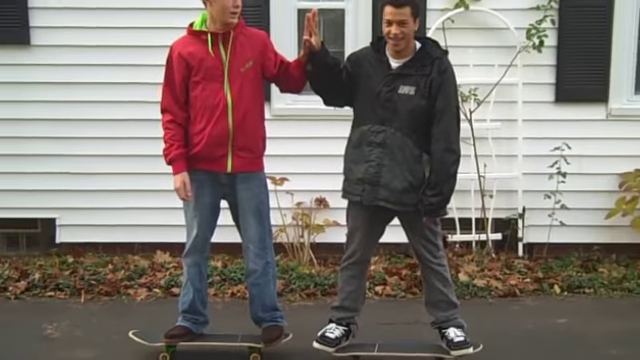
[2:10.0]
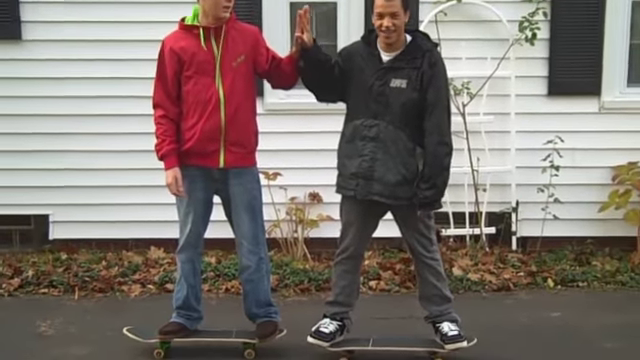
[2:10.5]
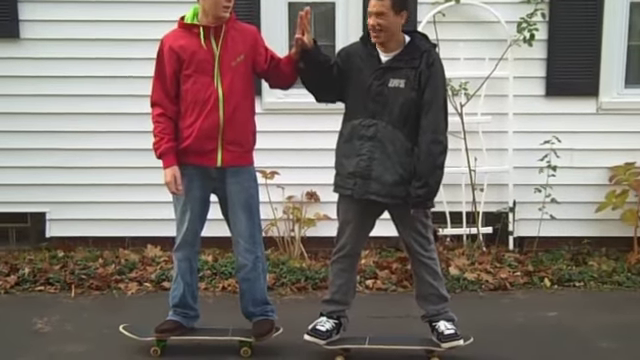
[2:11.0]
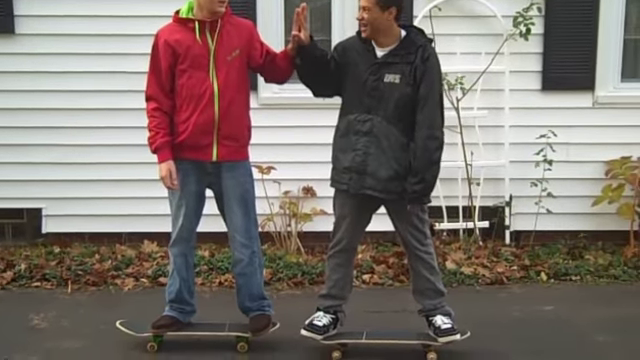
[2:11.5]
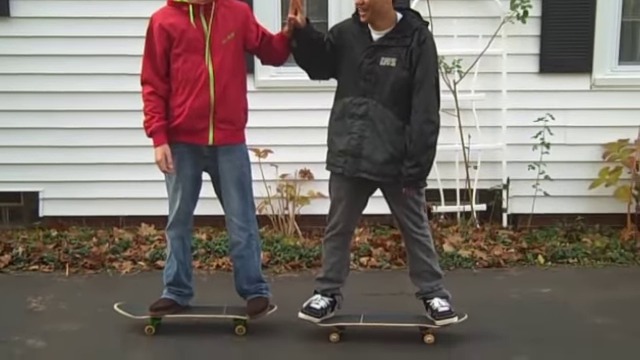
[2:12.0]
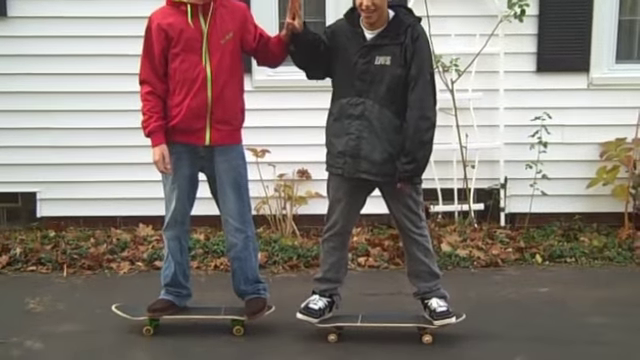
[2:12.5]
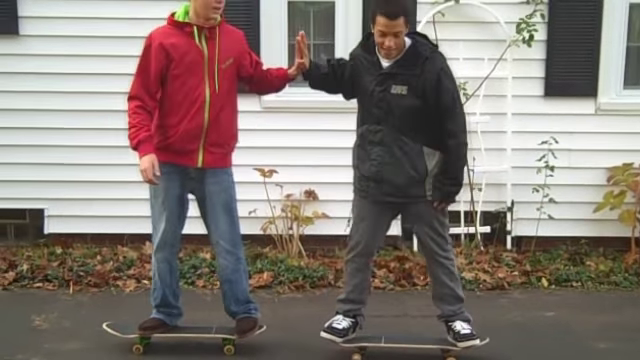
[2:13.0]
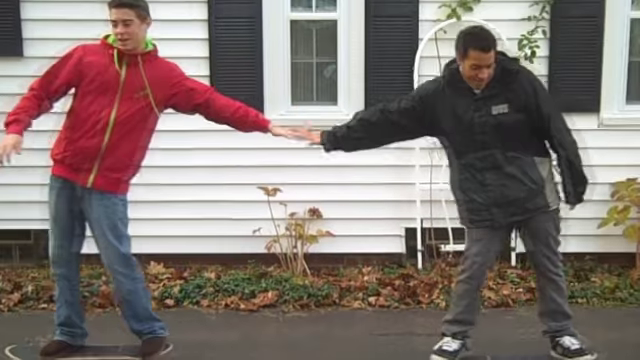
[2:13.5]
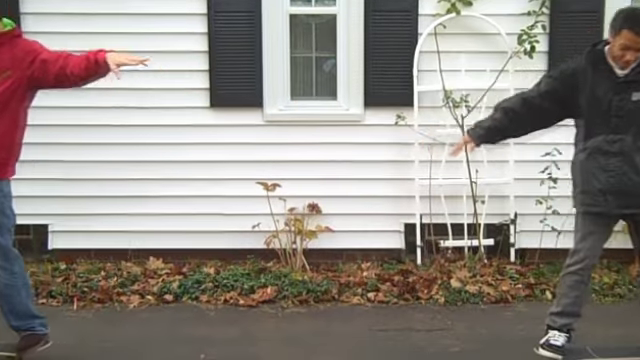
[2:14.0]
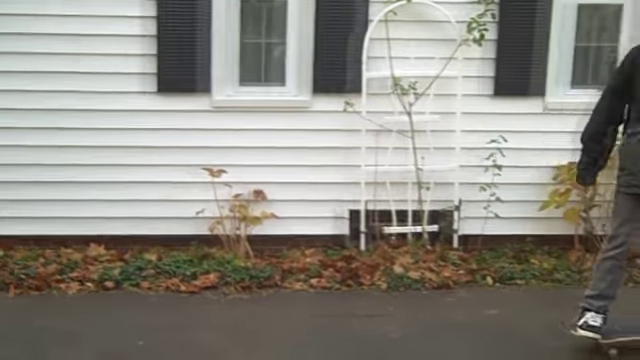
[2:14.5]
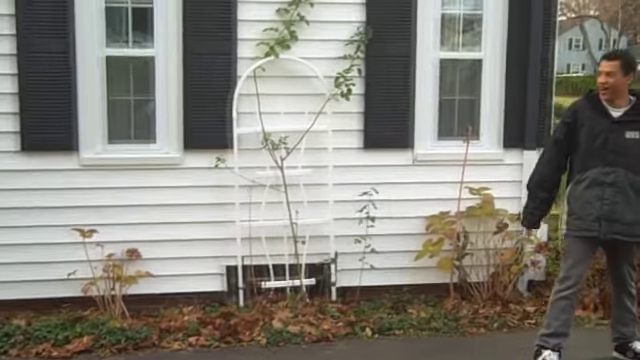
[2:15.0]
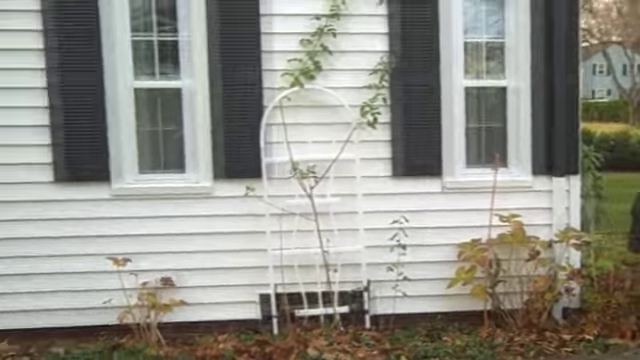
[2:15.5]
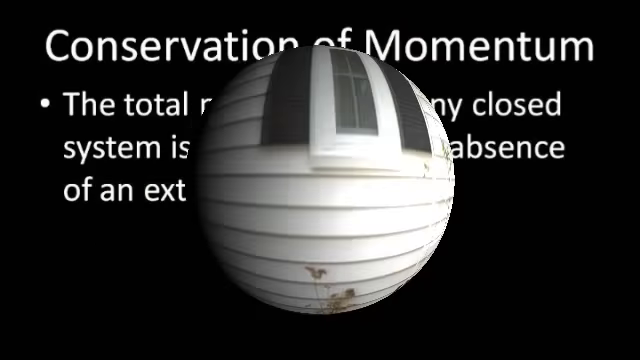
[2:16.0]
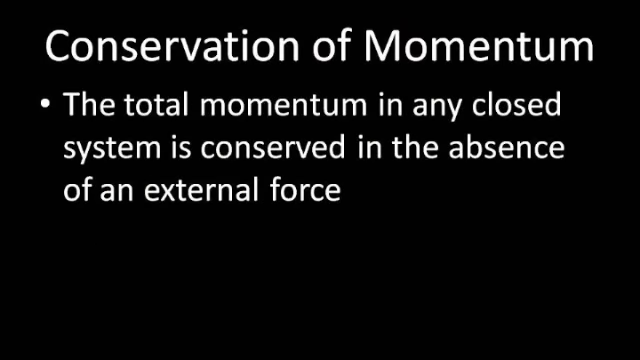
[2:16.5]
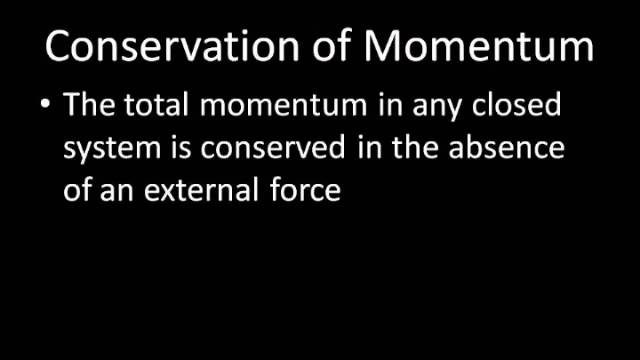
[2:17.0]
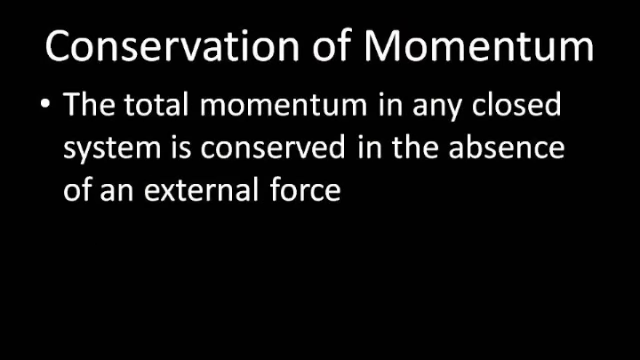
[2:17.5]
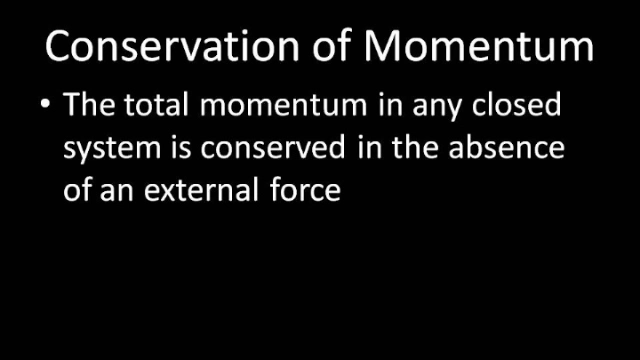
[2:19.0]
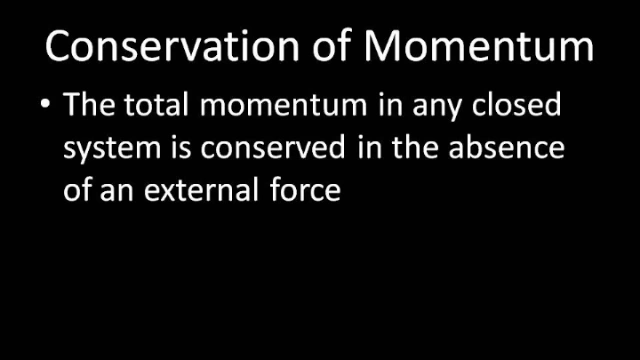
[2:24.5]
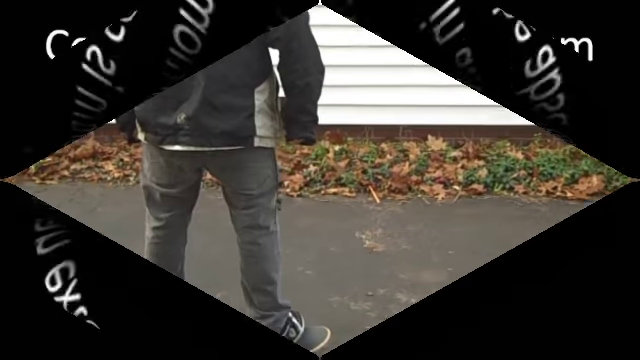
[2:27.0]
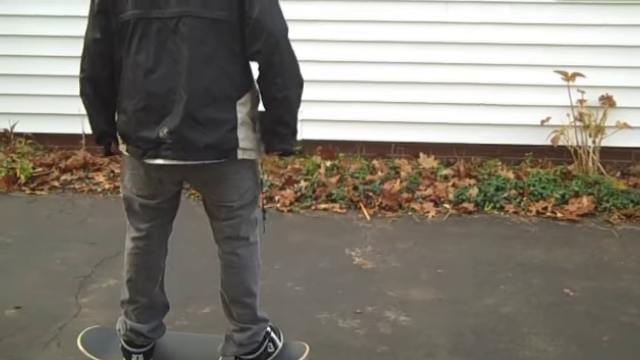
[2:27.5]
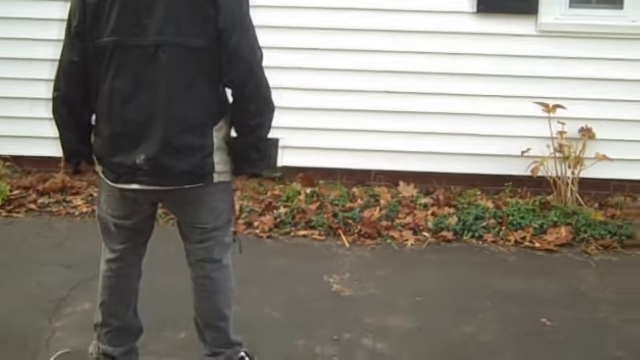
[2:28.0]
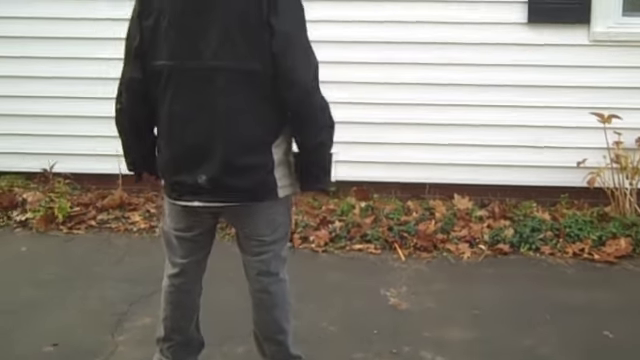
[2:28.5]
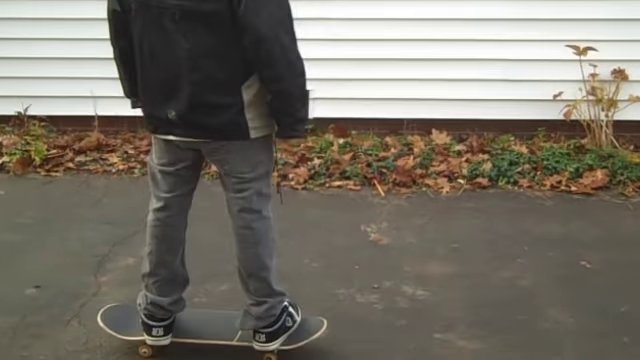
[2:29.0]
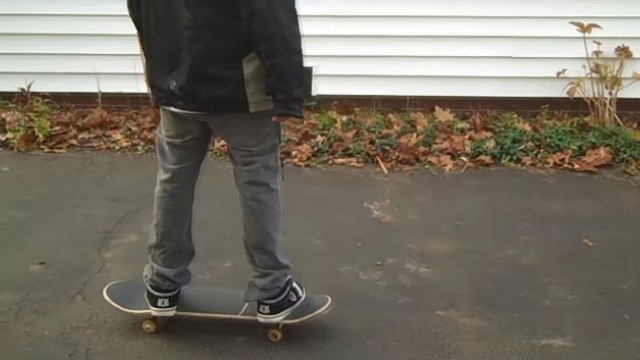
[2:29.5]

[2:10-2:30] The black guy is grinning and laughing while the other guy looks serious. The black guy's left arm hangs down in front, and he has a wider stance. The other guy is standing on a skateboard, which makes him a little taller. The black guy keeps laughing, and the camera pans down a little so the white guy is cut off. With both hands together as in the high-five, they shove off each other and go in opposite directions, both on skateboards. The white guy looks like he is almost losing balance, leaning crooked to his left and putting his arms out to the side to hold himself up. The scene rolls up like a ball and out of the way. A slide reads "conservation momentum," with a bullet point: "the total momentum any closed system is conserved in the absence of an external force." The black guy is then shown skating from behind, showing the back of his jacket and his footwork. There is some writing on the back of the jacket, like a number, that cannot be made out, or maybe it says "B.O.B." There is also a white emblem on the side of a shoe.